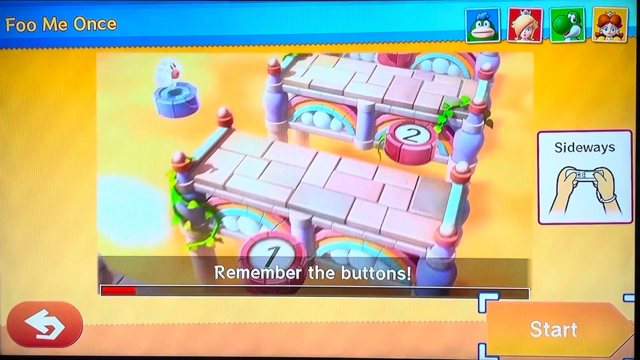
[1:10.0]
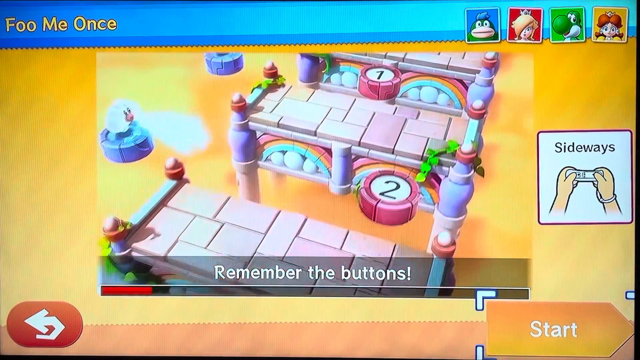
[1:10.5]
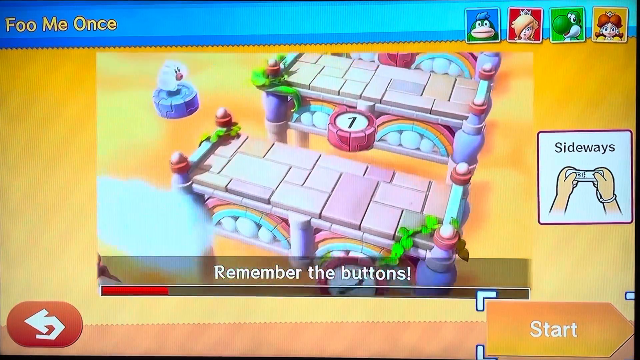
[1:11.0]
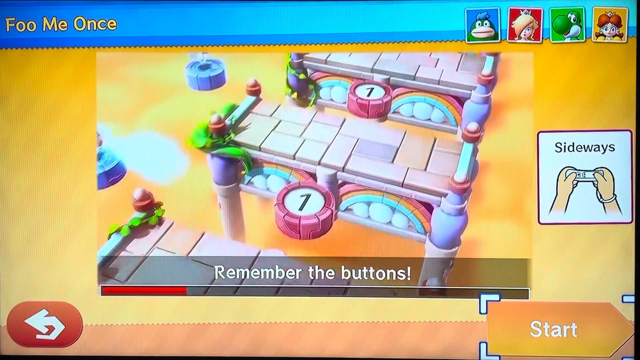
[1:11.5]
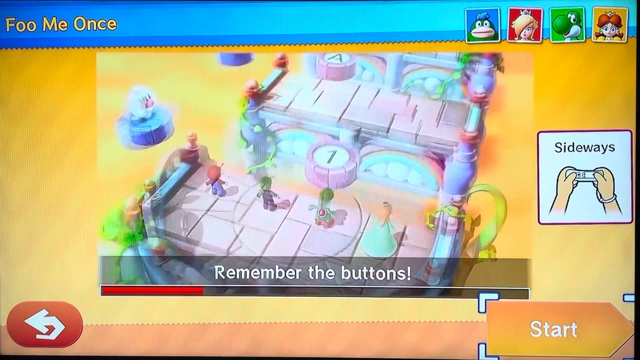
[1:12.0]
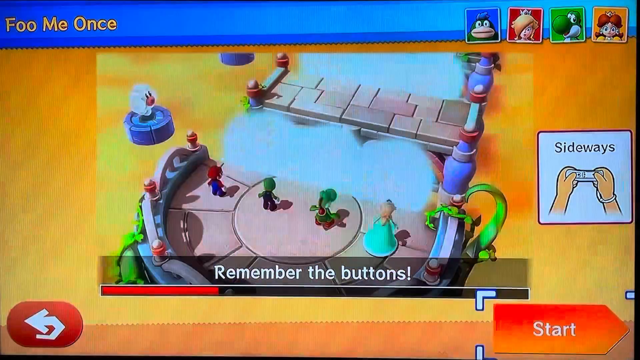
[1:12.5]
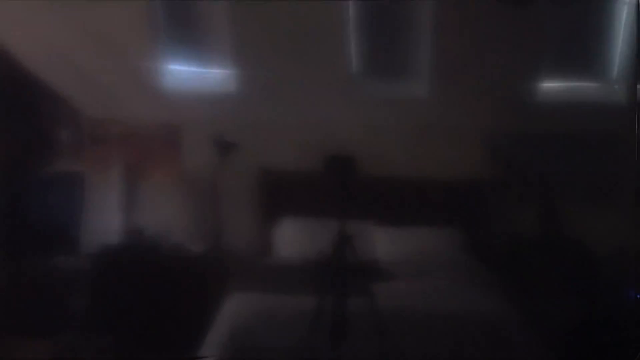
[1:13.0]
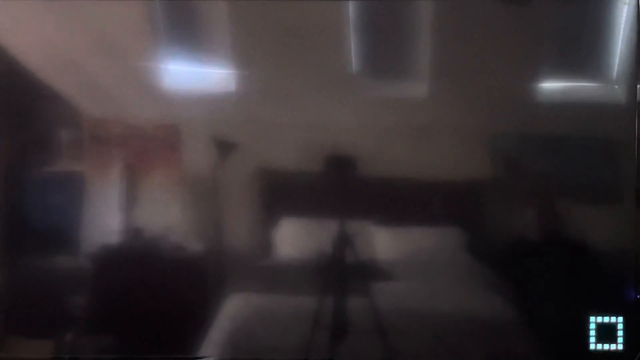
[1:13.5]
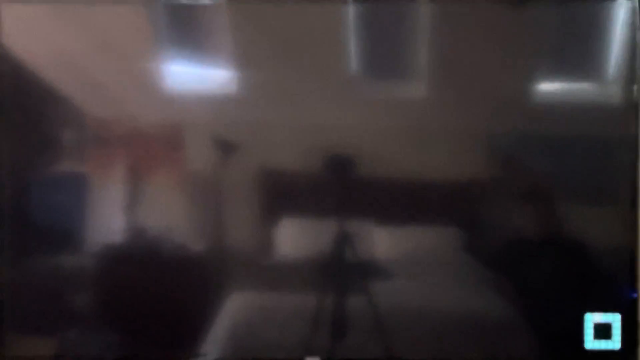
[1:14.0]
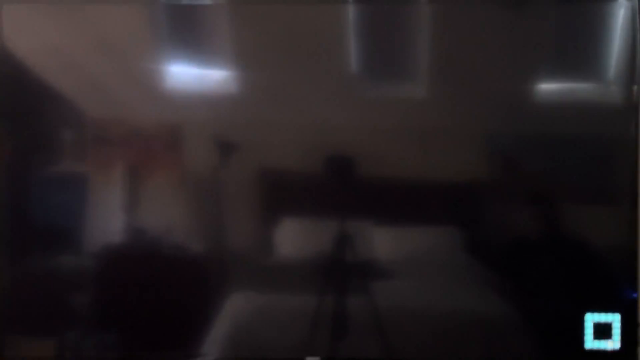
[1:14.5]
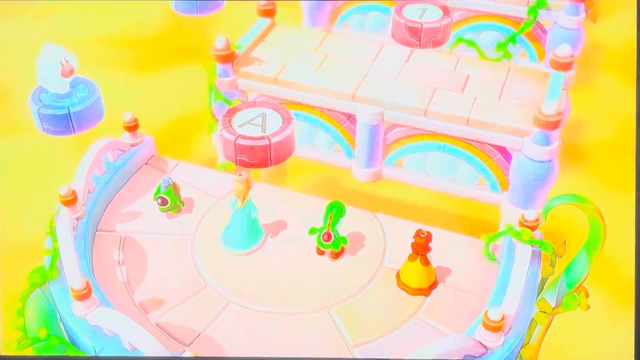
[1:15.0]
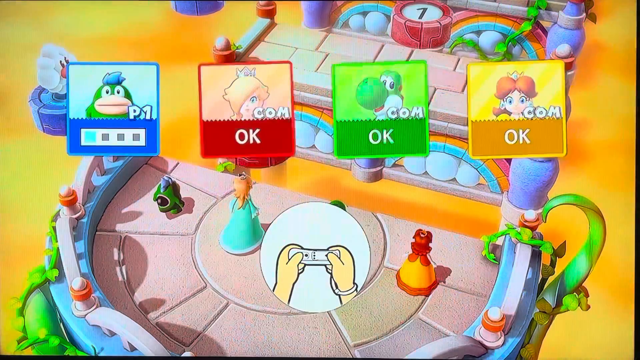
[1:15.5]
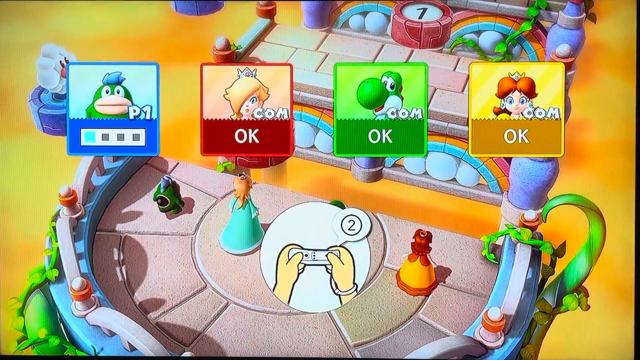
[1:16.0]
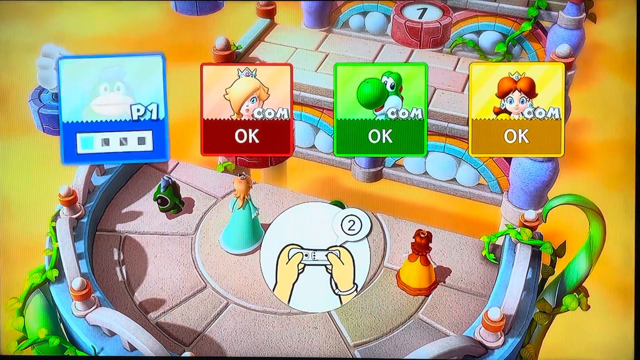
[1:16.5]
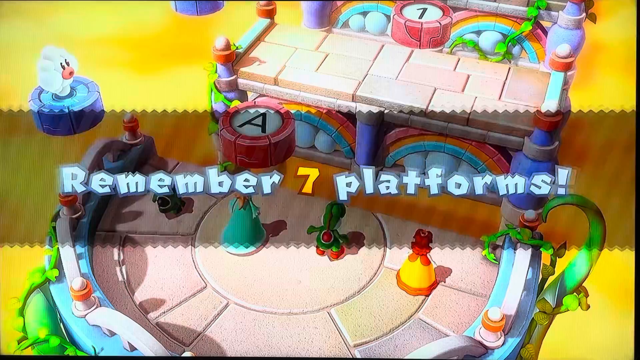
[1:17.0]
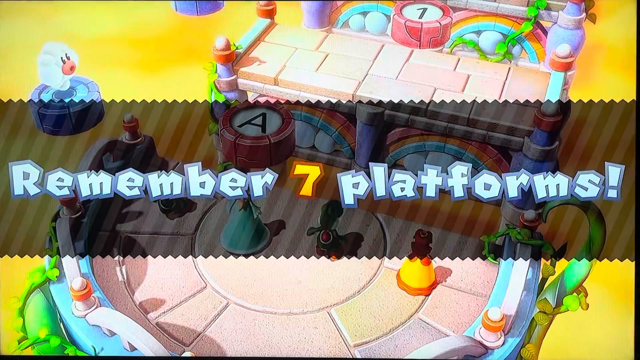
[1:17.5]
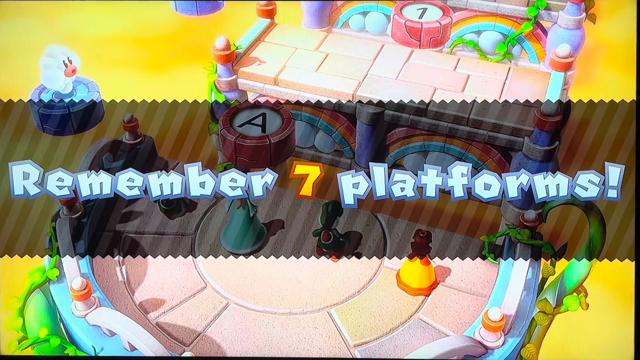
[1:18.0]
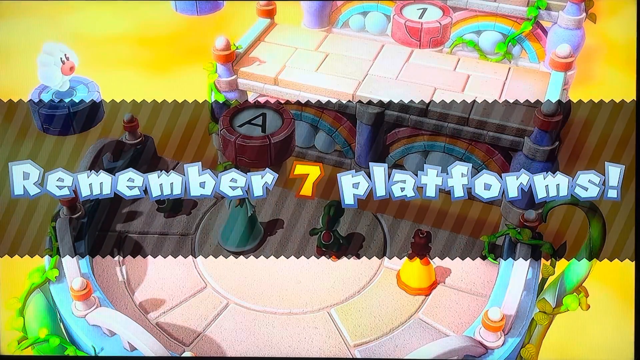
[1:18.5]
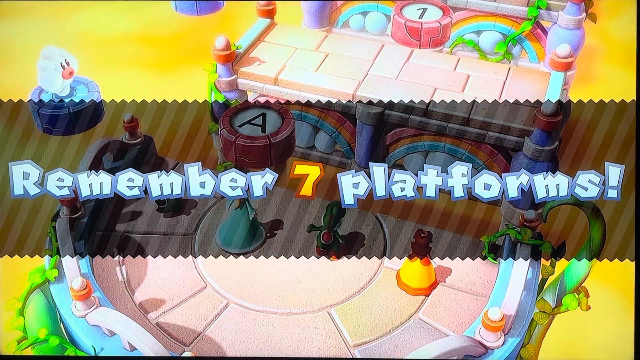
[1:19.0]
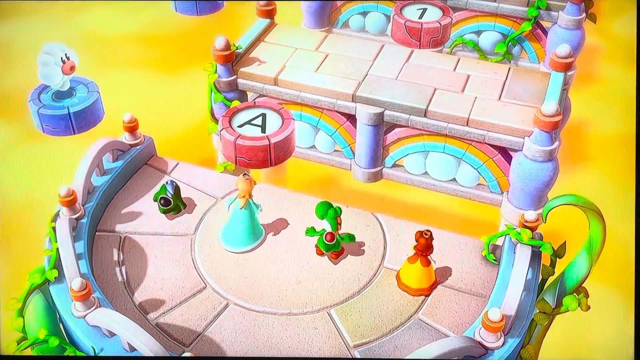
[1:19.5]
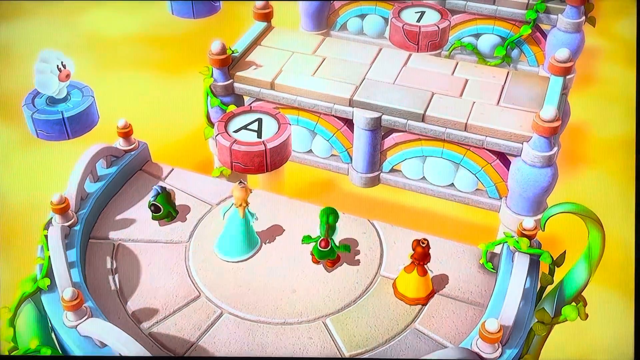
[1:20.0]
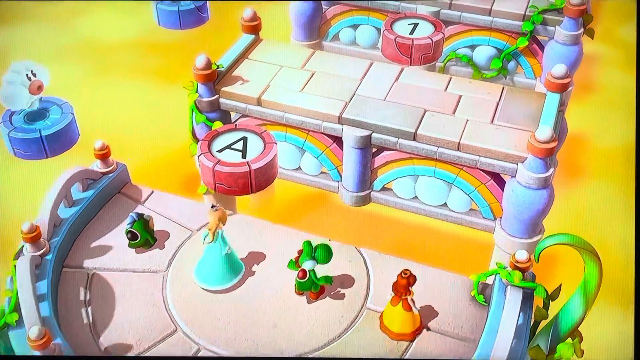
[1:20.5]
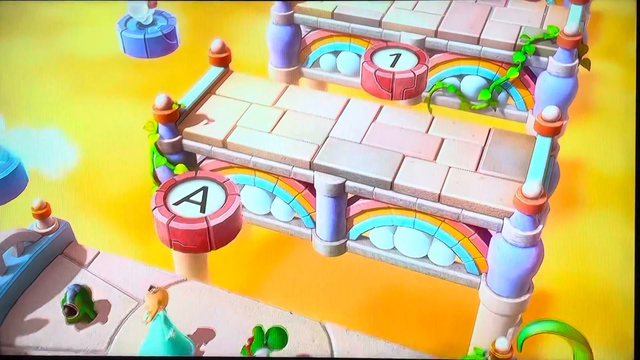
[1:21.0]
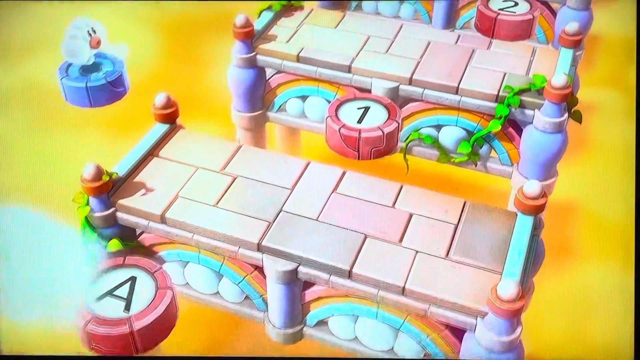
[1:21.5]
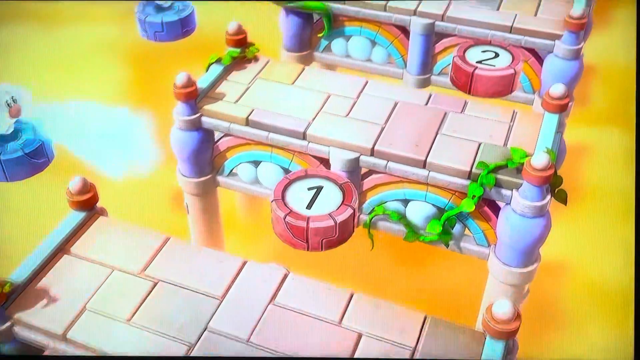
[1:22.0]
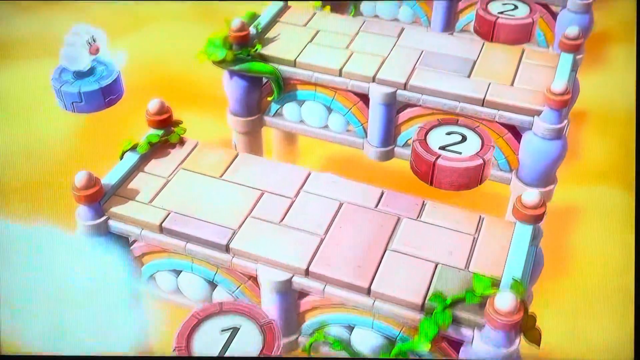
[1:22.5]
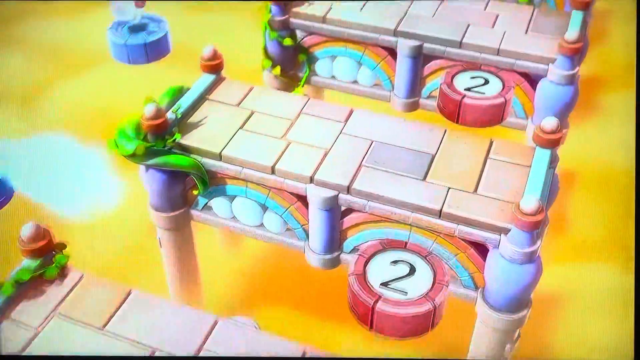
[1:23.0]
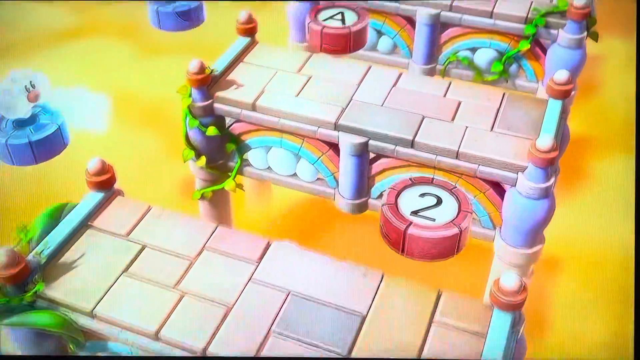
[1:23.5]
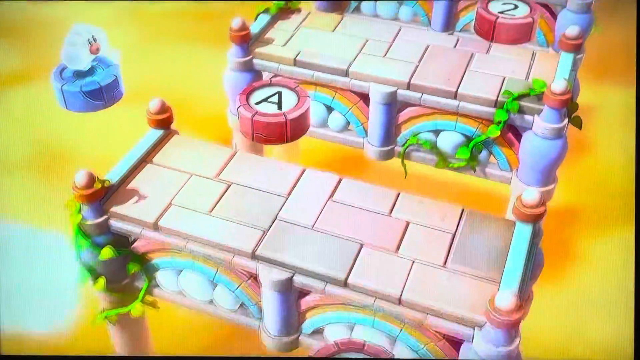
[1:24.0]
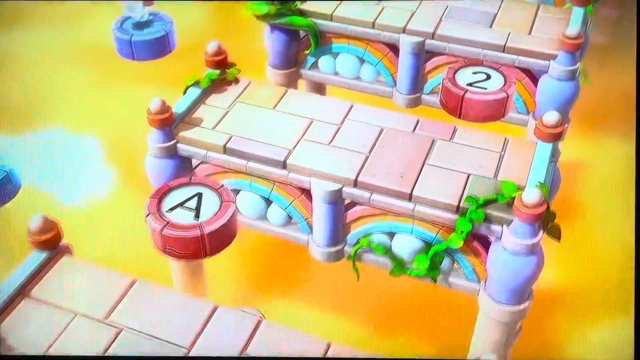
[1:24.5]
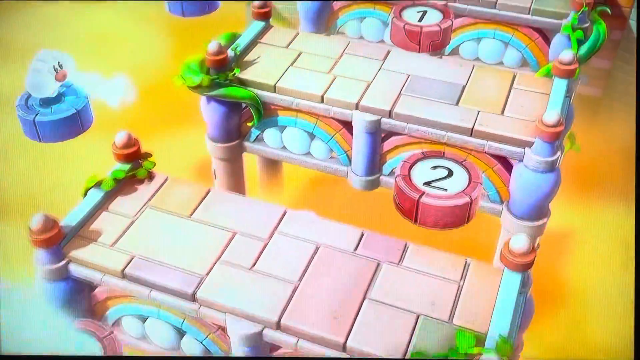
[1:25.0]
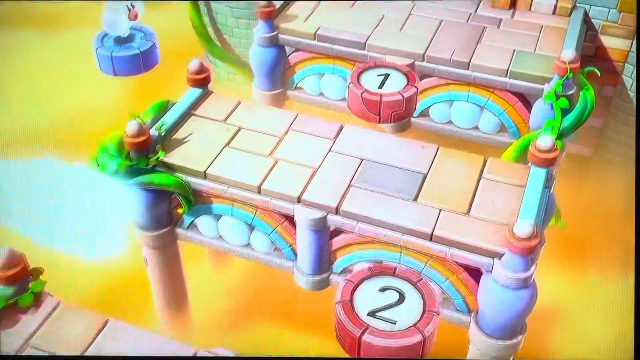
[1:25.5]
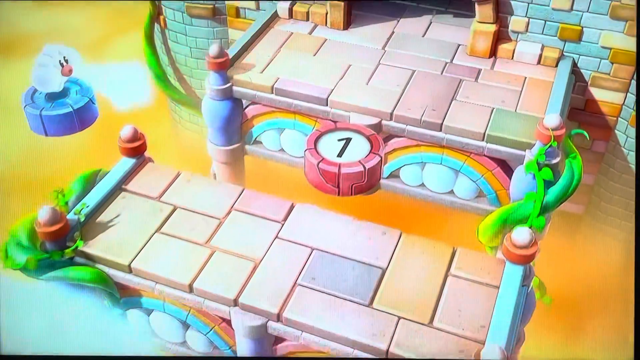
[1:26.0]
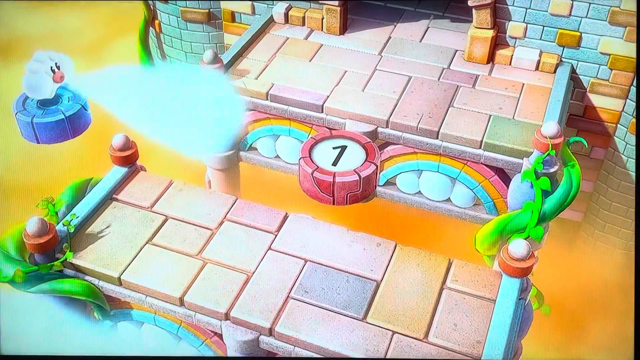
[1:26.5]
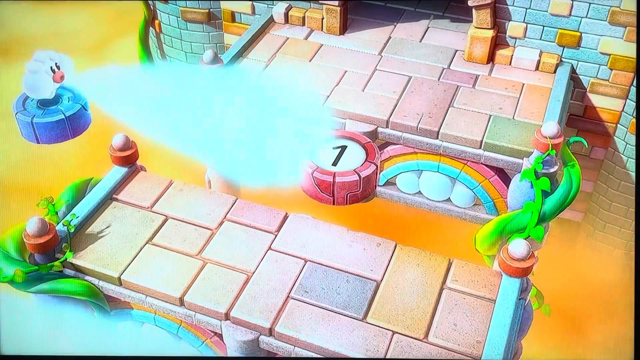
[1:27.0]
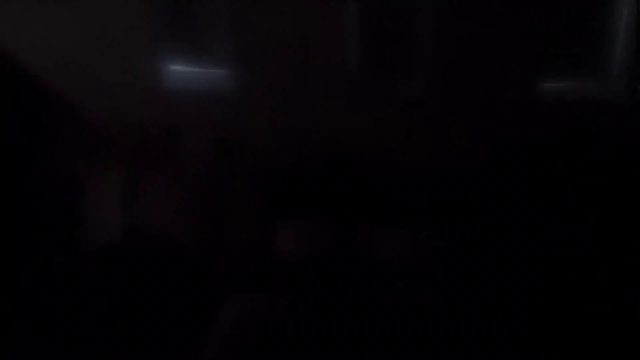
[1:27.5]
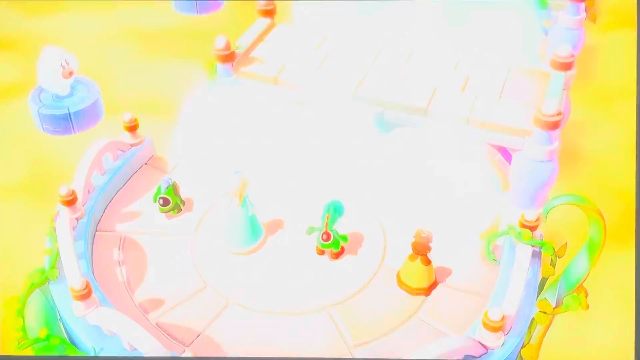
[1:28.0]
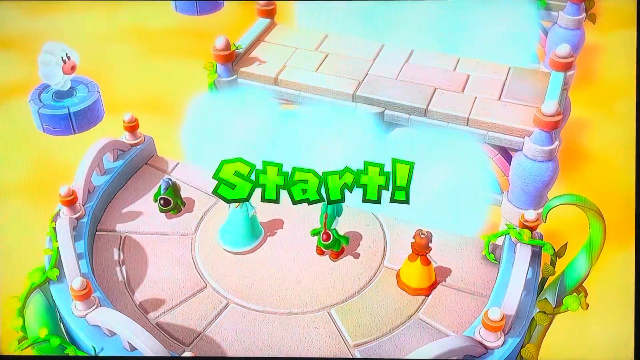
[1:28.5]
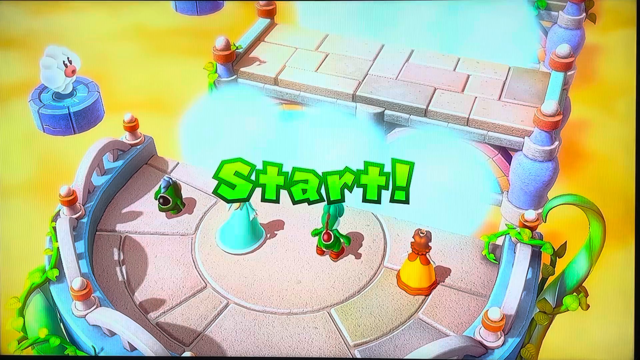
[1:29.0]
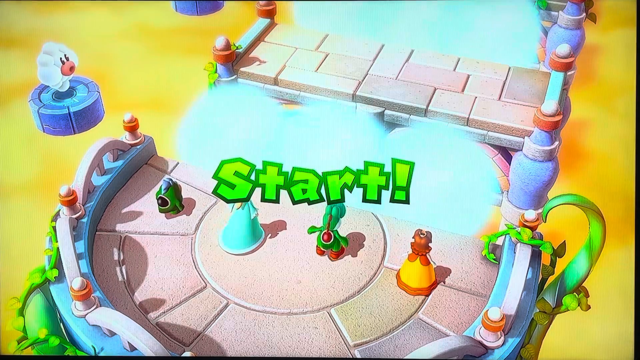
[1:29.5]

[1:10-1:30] A tutorial shows where the platforms are before the gameplay starts. The point of the game is to remember the platforms and jump to the correct spot.